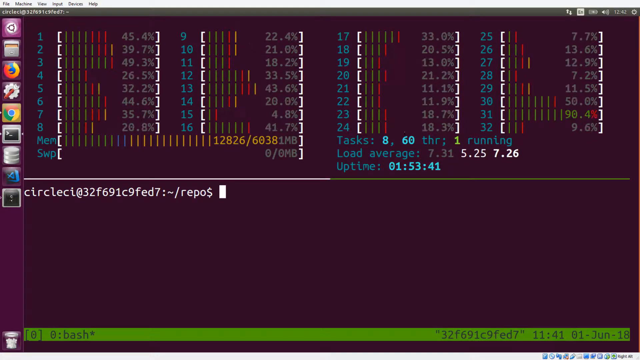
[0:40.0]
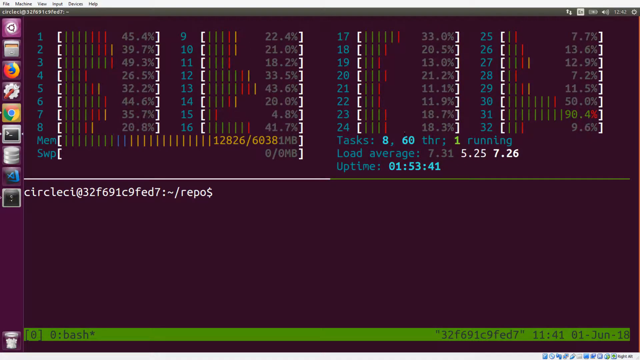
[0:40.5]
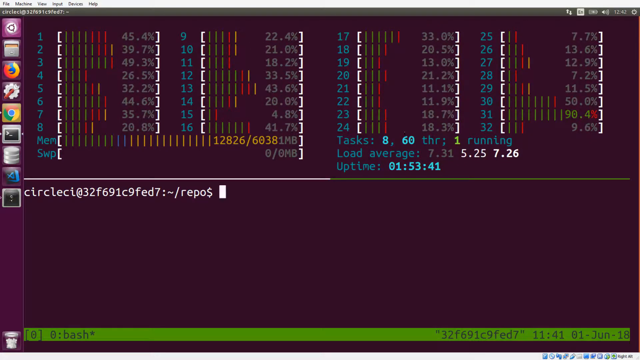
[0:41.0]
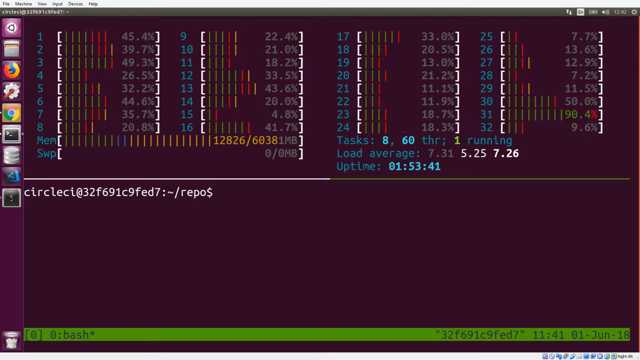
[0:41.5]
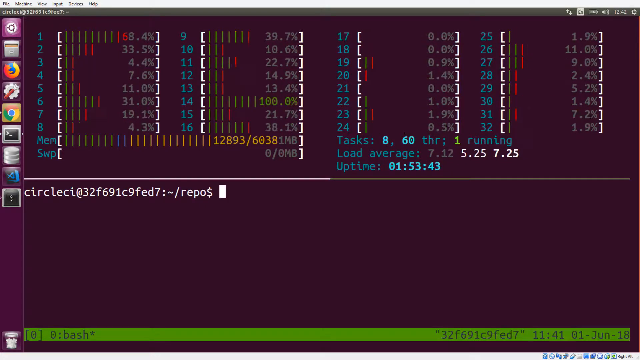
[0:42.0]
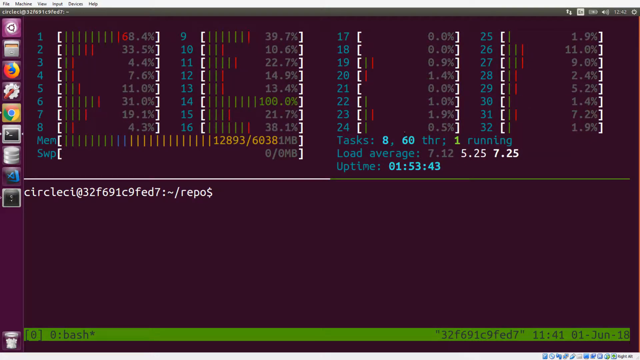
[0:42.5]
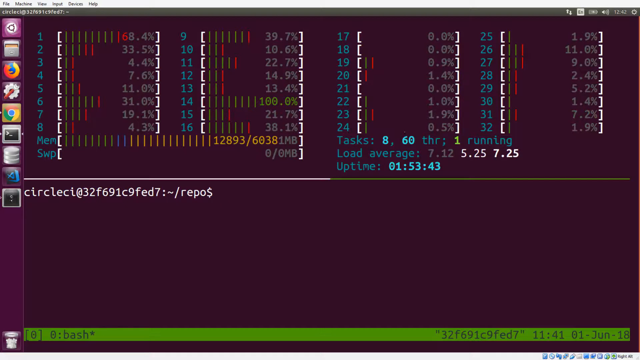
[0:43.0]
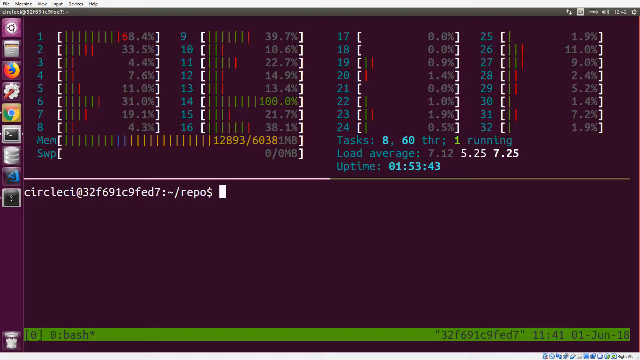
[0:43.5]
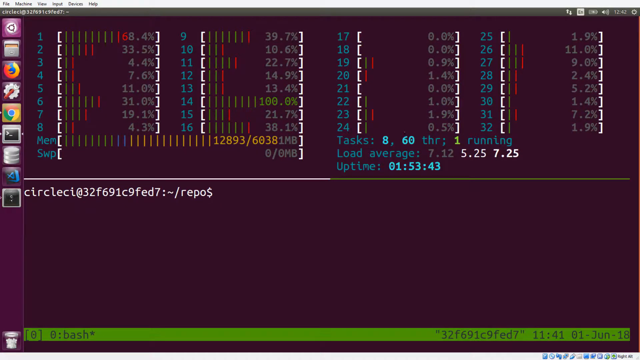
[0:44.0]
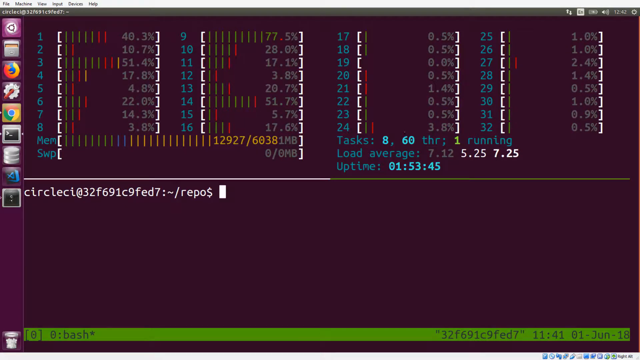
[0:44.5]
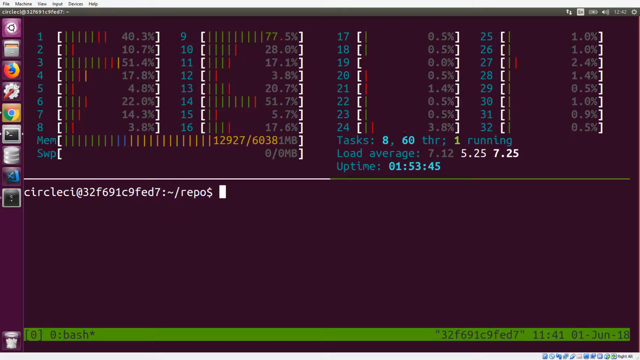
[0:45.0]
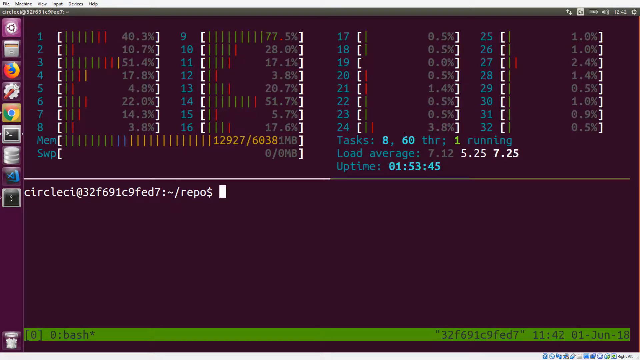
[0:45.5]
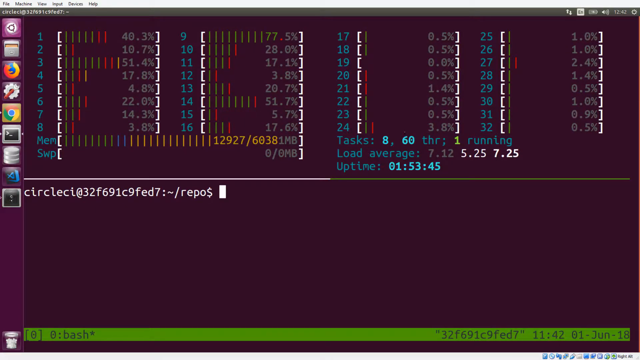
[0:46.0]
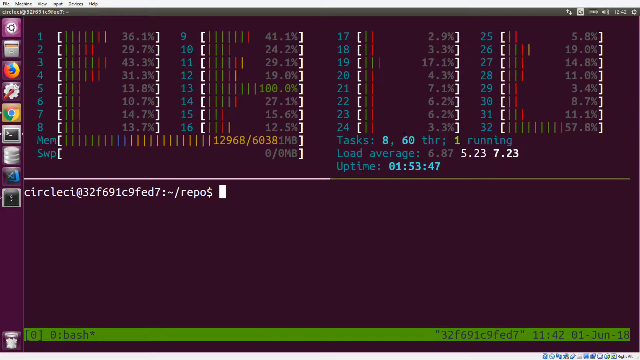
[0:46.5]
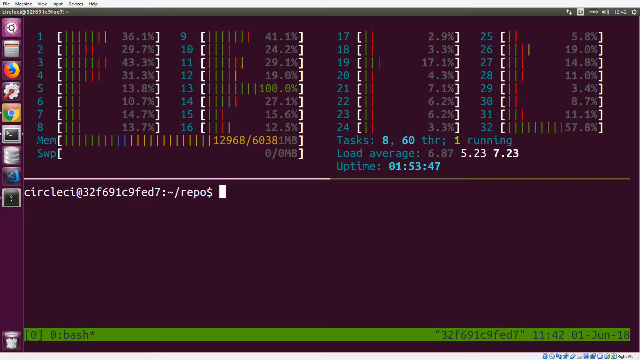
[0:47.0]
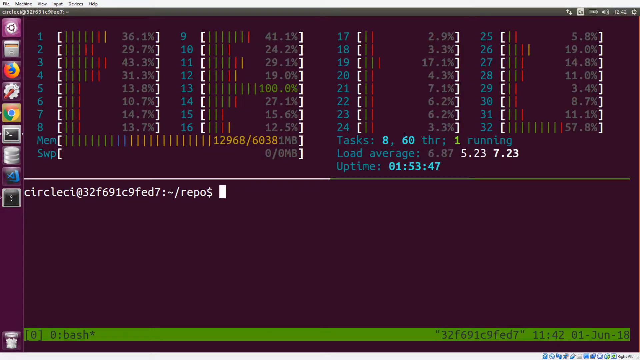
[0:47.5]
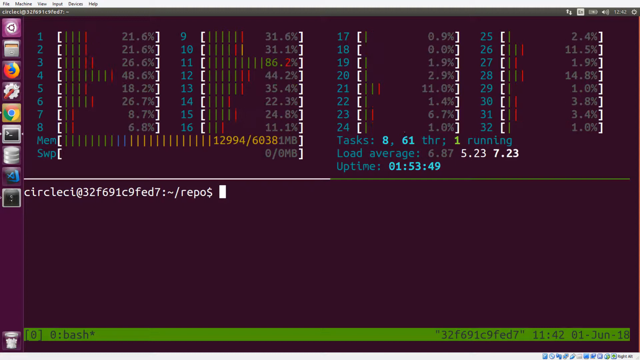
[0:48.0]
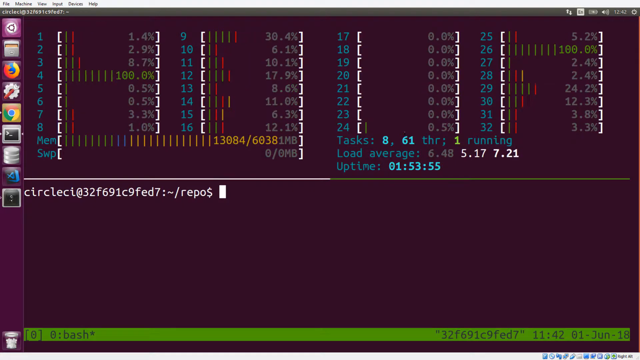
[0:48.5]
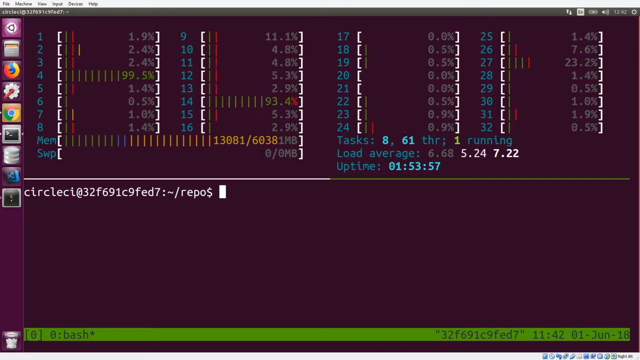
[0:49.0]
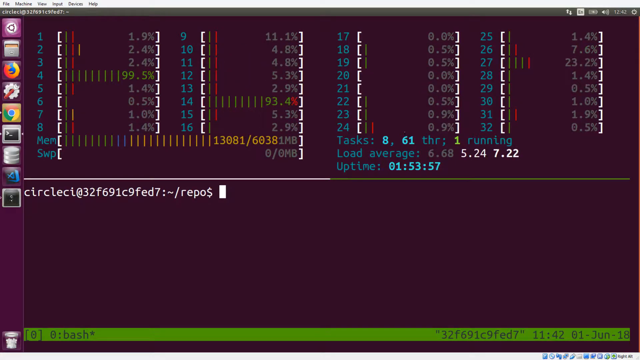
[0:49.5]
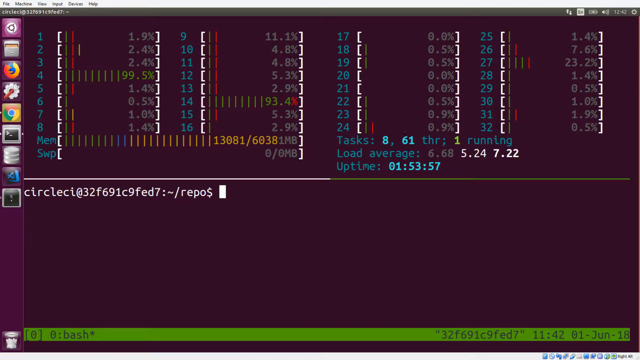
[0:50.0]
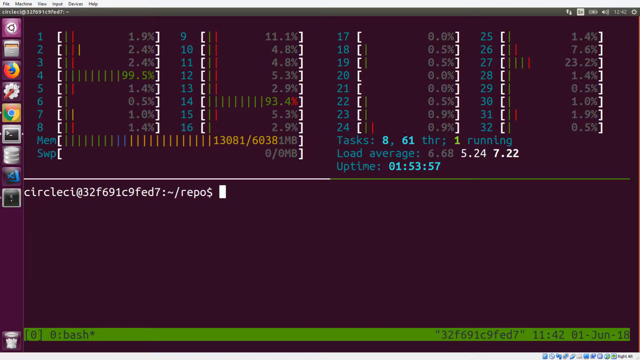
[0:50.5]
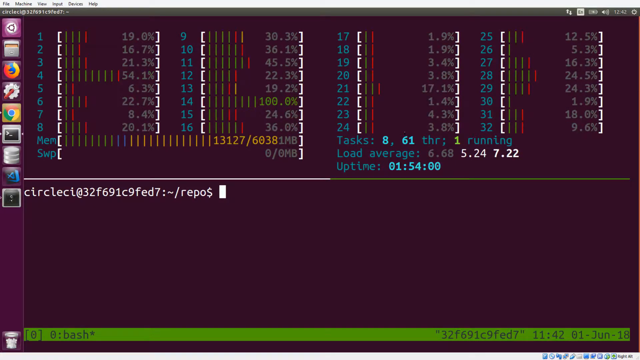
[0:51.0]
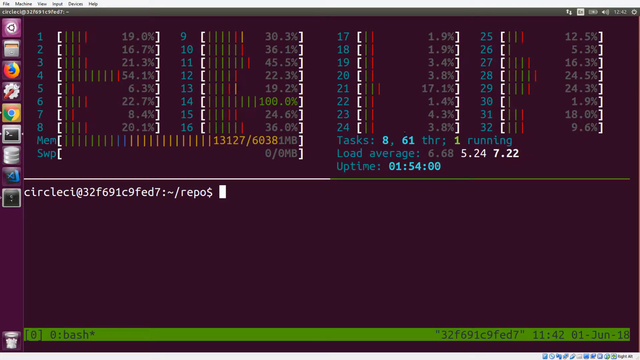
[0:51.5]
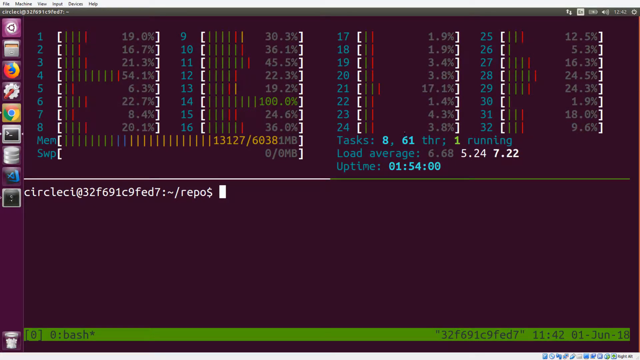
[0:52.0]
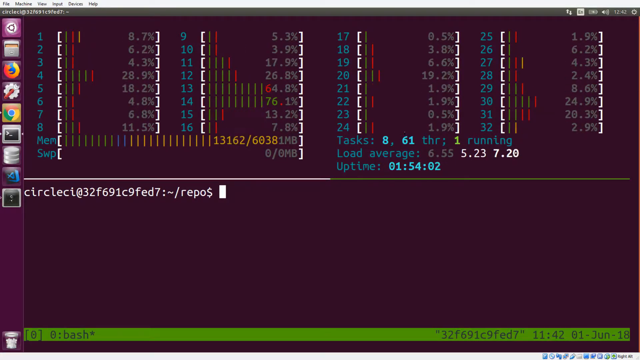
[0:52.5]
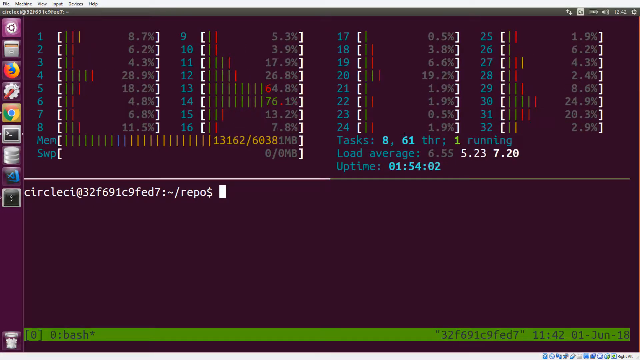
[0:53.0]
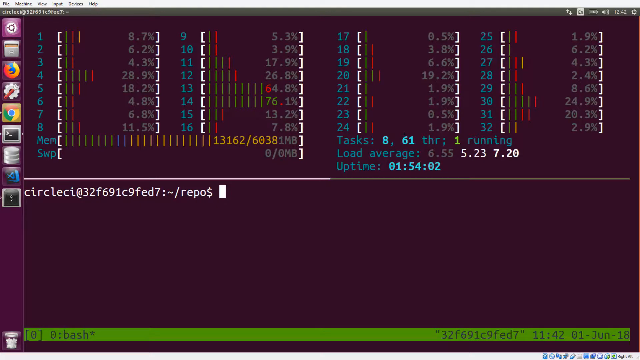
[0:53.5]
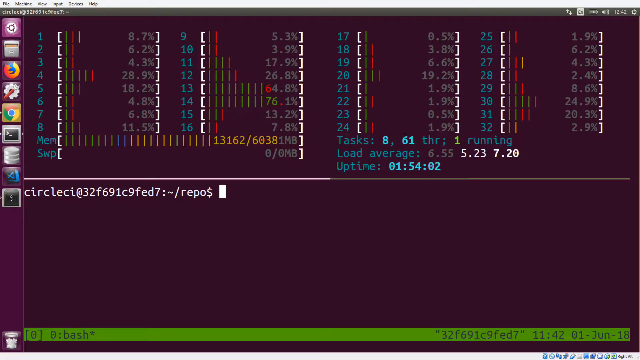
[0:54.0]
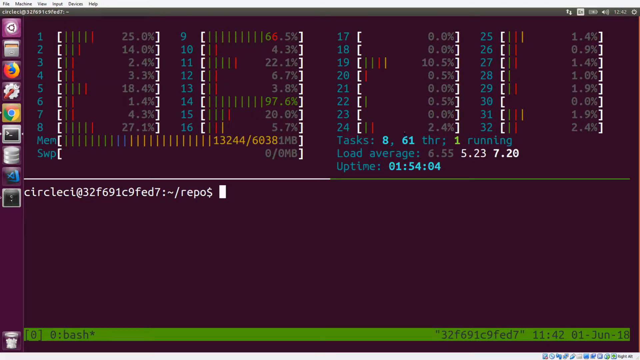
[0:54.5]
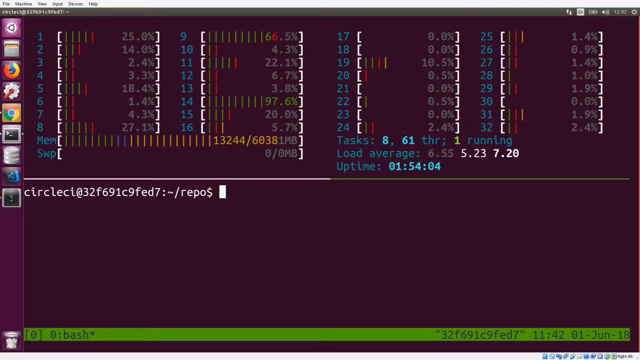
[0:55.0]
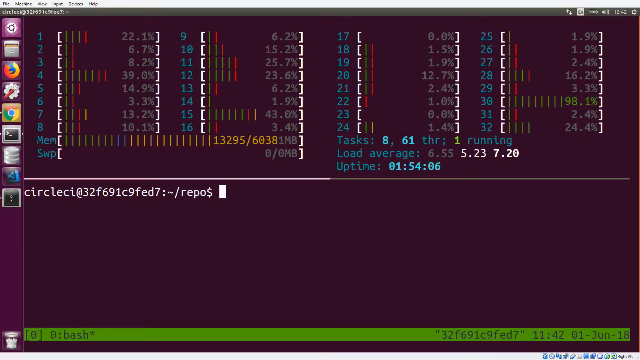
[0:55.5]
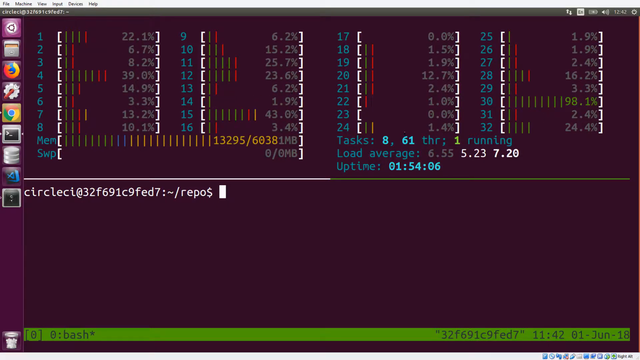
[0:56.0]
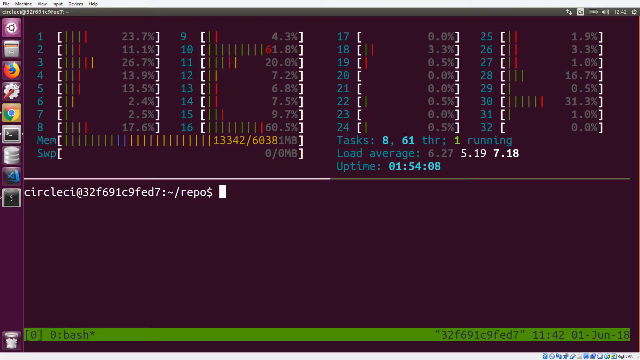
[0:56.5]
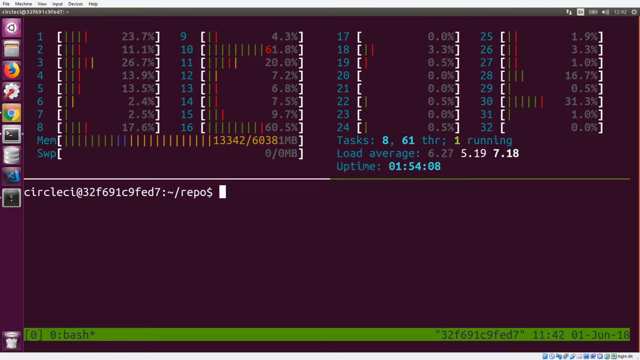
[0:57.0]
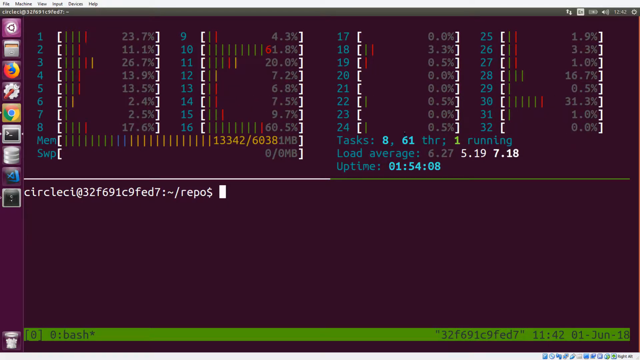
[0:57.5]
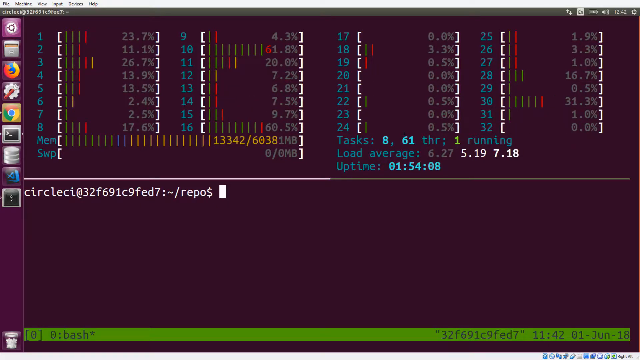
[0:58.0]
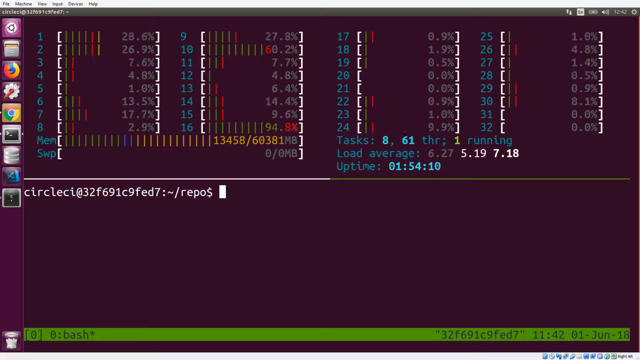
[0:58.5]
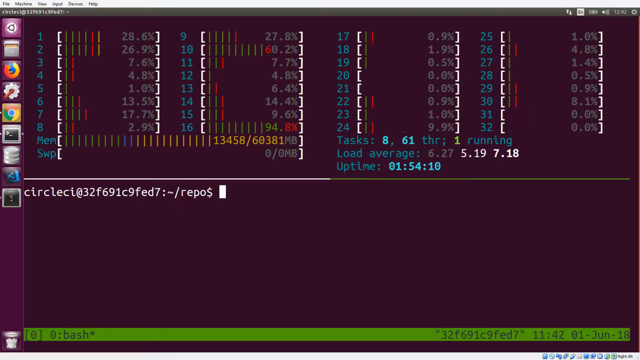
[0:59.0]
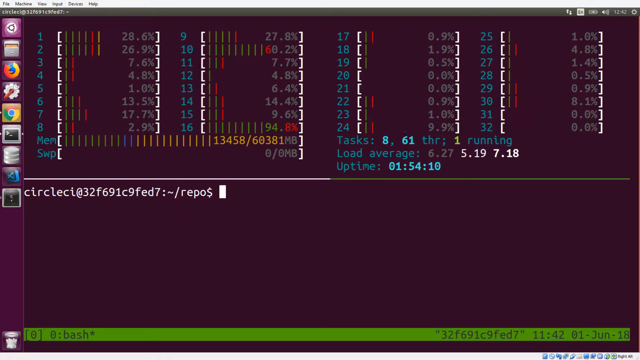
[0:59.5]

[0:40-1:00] The page shows numbers and percentages, including average load time and up time, possibly indicating how fast data is being processed for a website or product being tested. A changing array of colours appears, some much longer and with higher percentages than others, as though several tasks may be running at once. There are icons on the side and a settings tab, and the page seems to be monitoring the website or product.